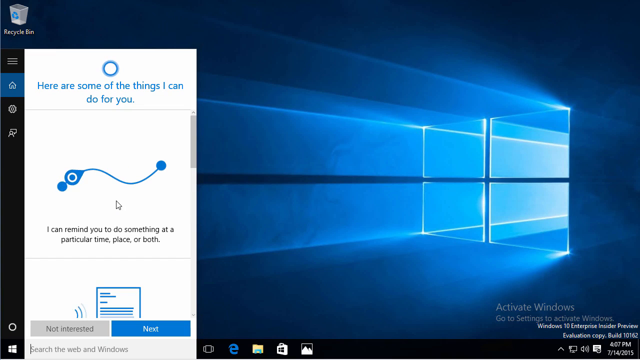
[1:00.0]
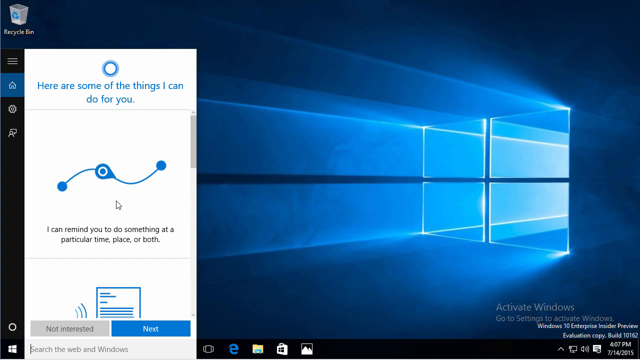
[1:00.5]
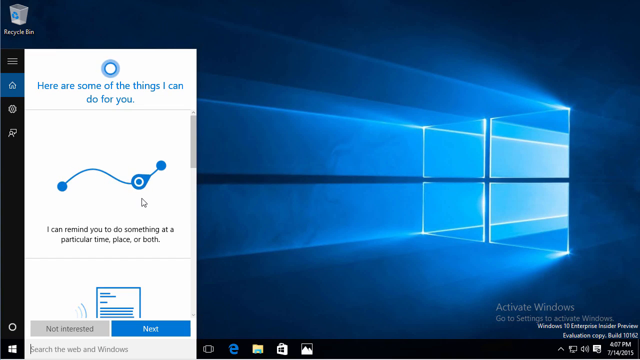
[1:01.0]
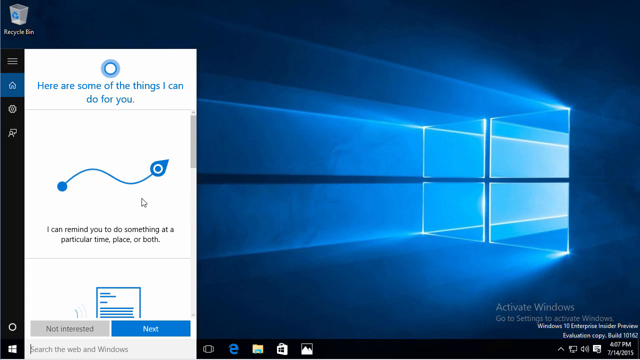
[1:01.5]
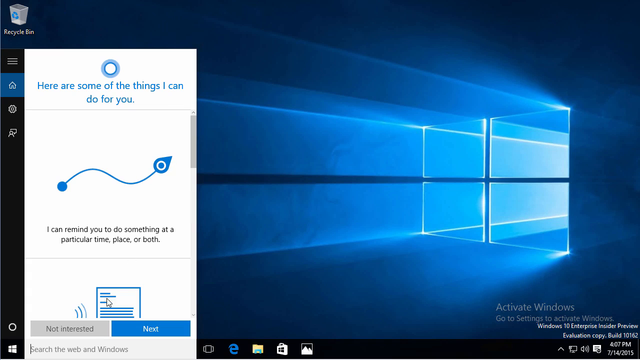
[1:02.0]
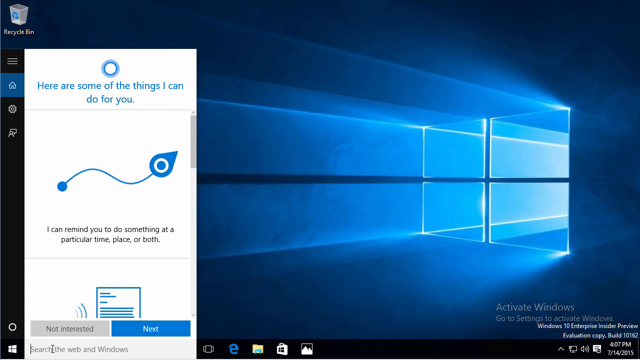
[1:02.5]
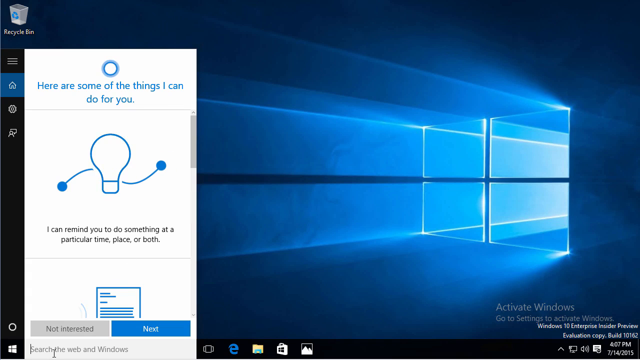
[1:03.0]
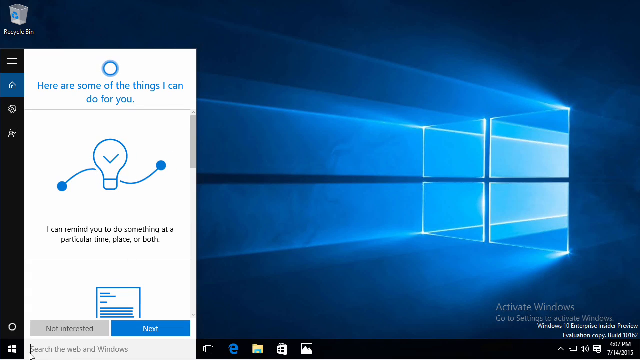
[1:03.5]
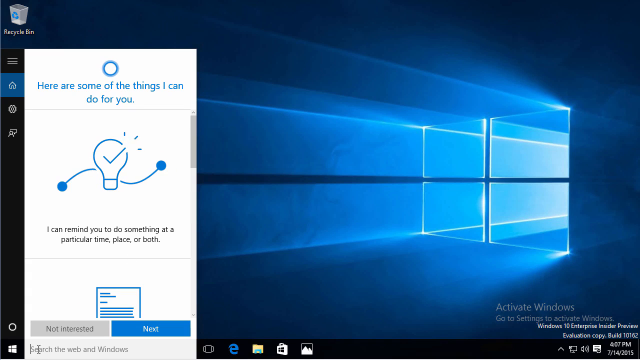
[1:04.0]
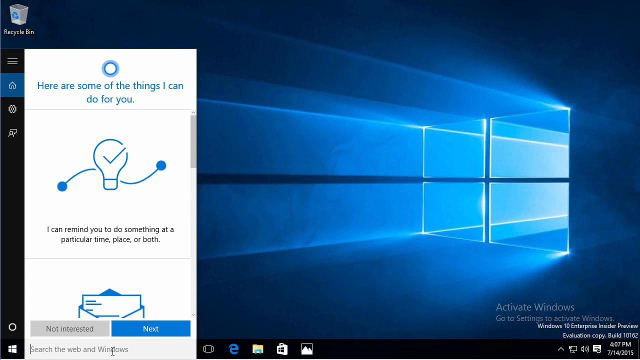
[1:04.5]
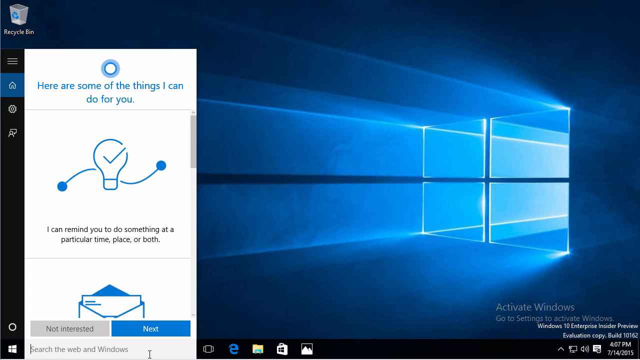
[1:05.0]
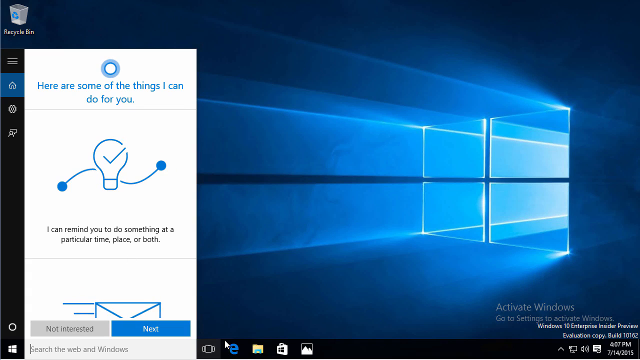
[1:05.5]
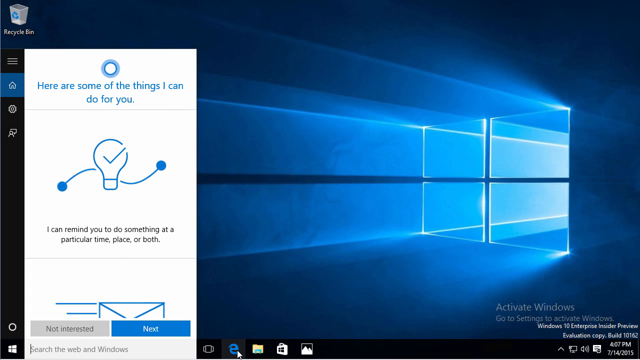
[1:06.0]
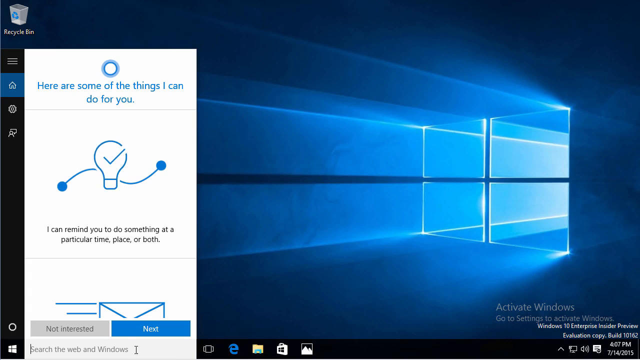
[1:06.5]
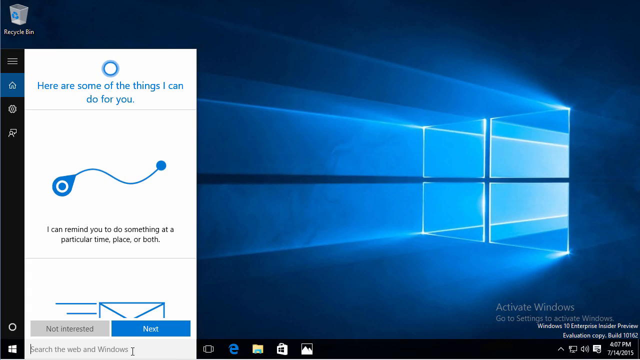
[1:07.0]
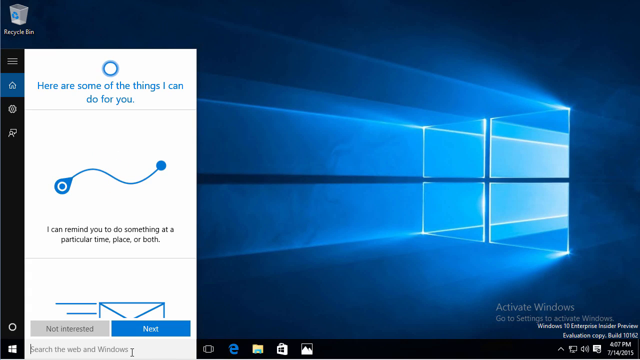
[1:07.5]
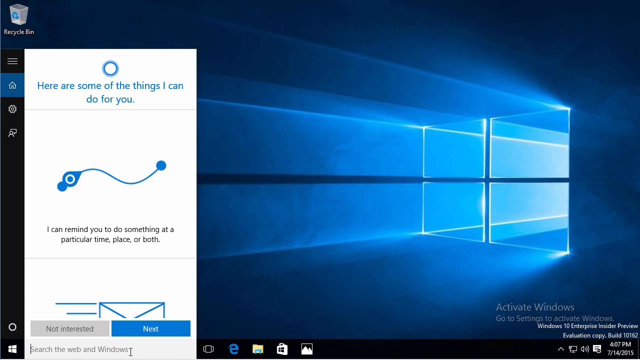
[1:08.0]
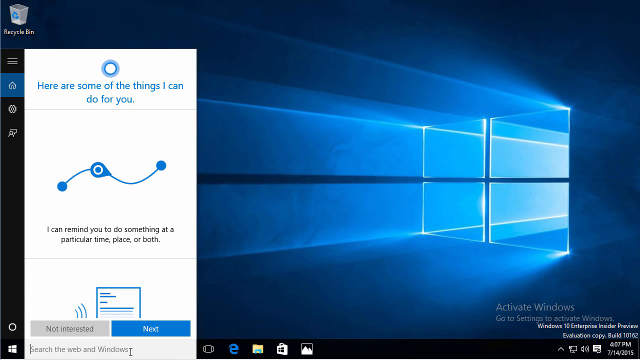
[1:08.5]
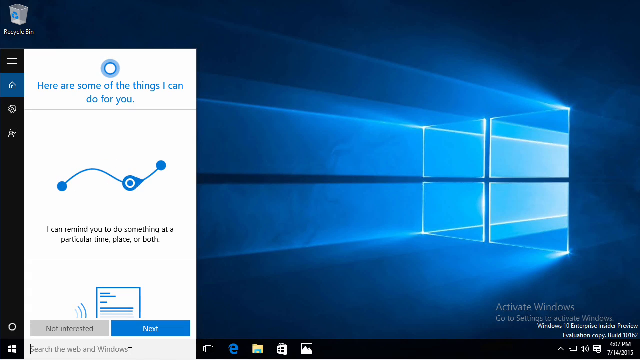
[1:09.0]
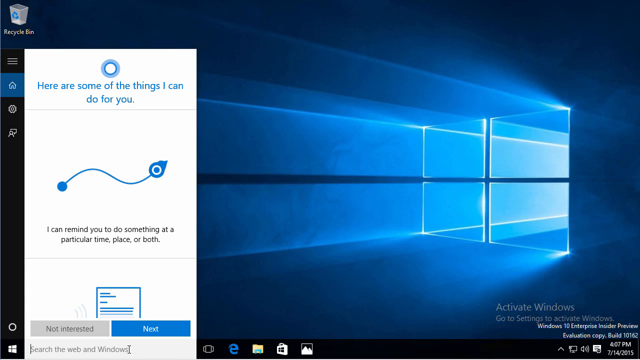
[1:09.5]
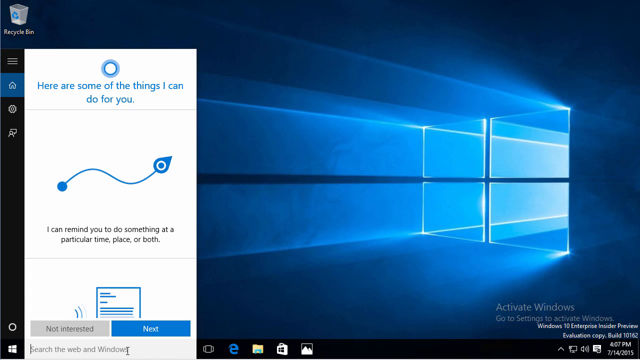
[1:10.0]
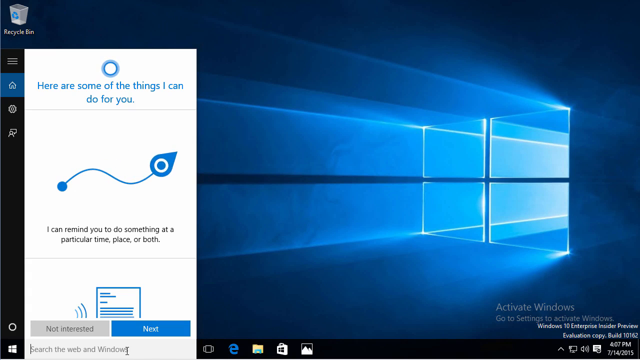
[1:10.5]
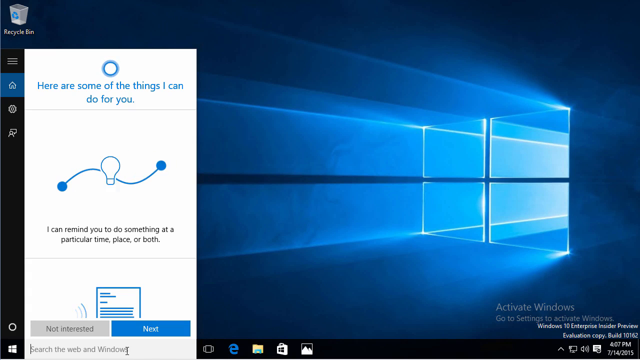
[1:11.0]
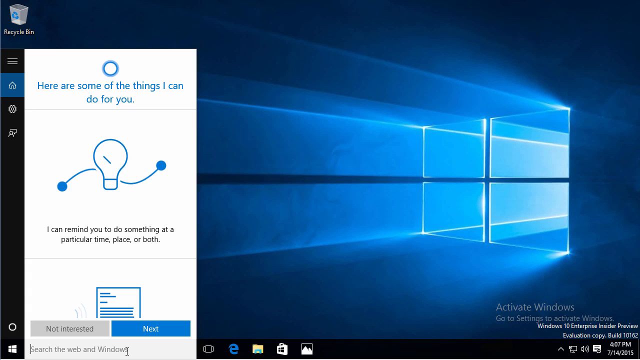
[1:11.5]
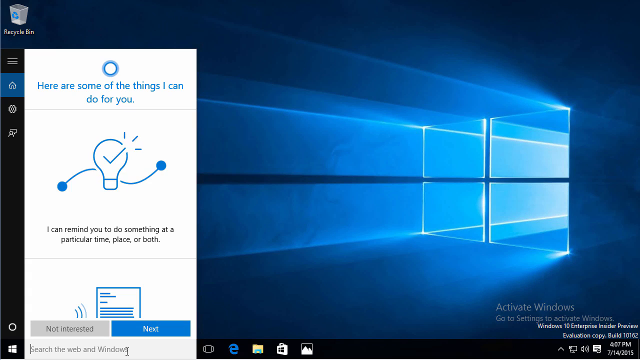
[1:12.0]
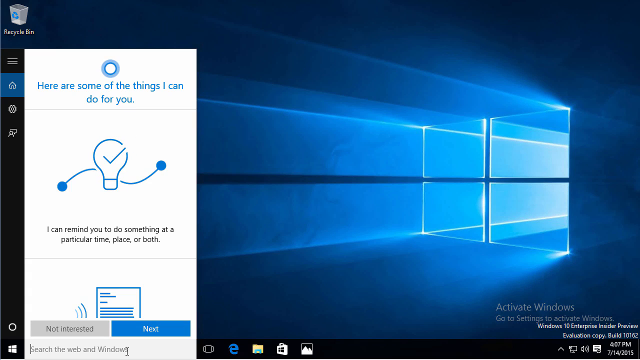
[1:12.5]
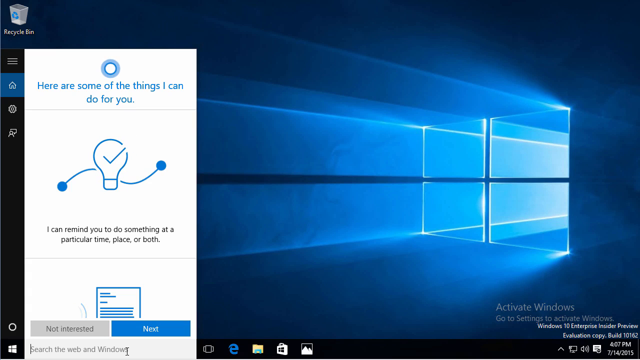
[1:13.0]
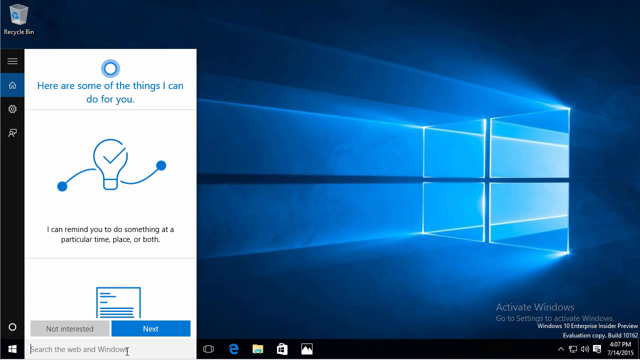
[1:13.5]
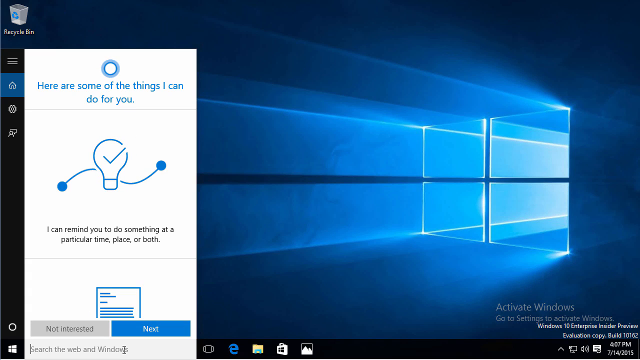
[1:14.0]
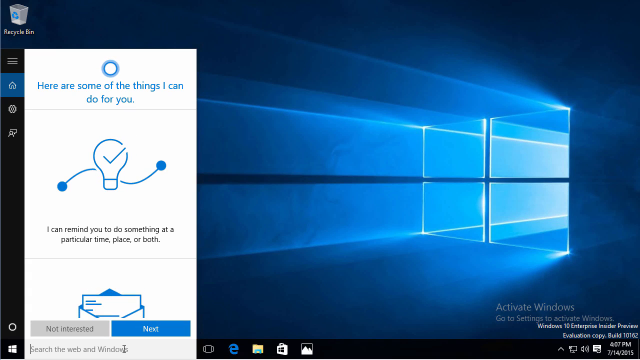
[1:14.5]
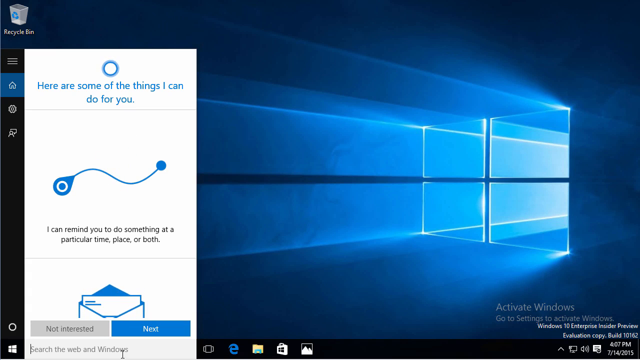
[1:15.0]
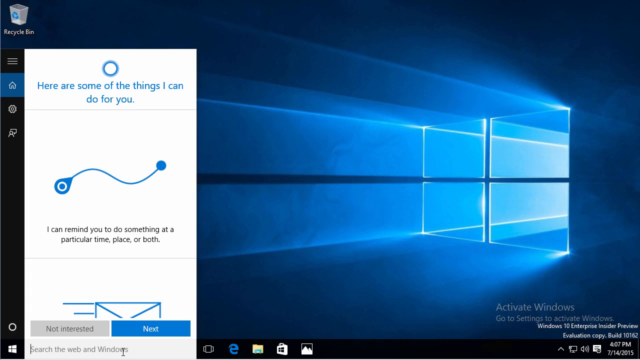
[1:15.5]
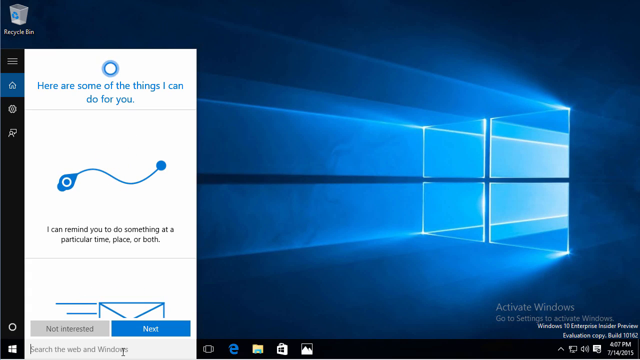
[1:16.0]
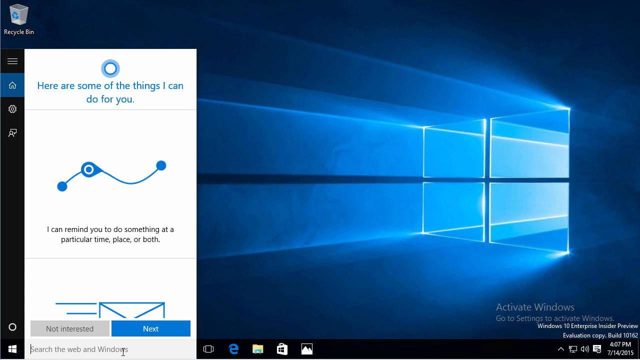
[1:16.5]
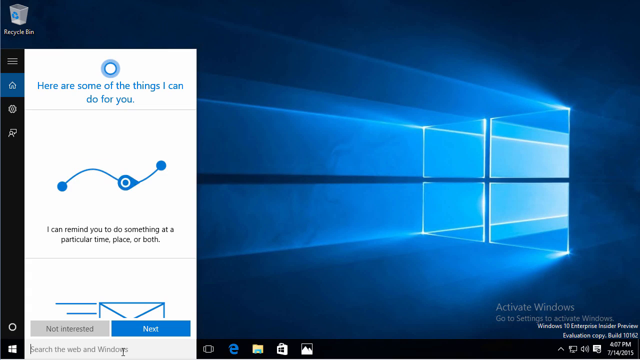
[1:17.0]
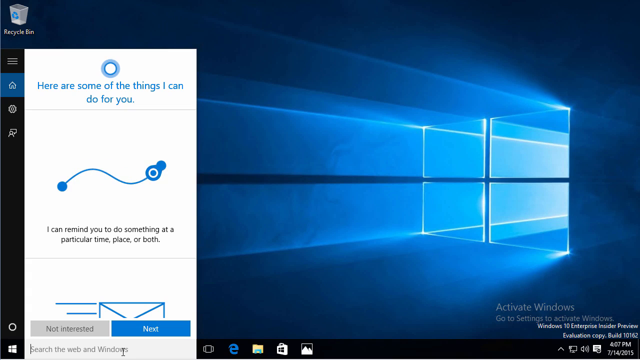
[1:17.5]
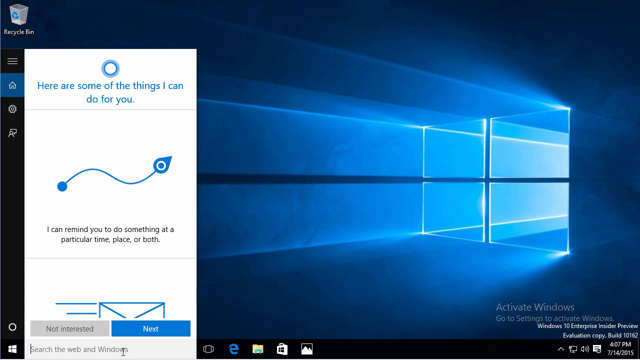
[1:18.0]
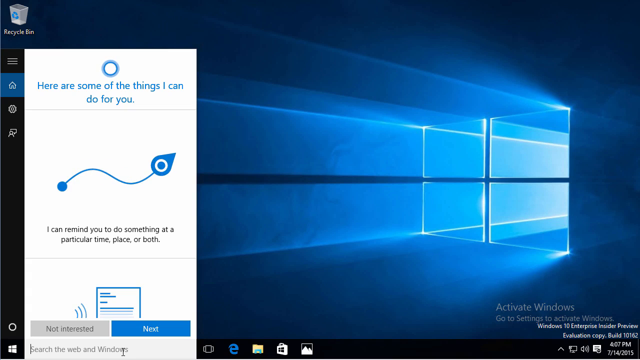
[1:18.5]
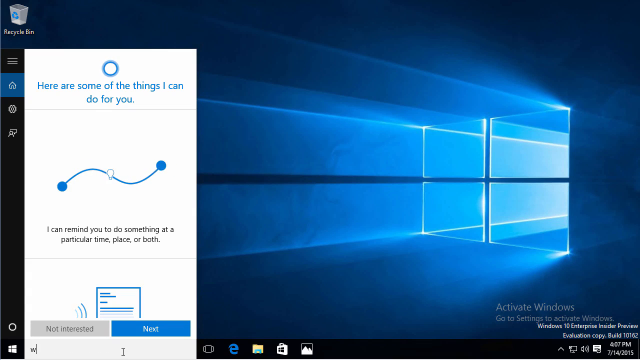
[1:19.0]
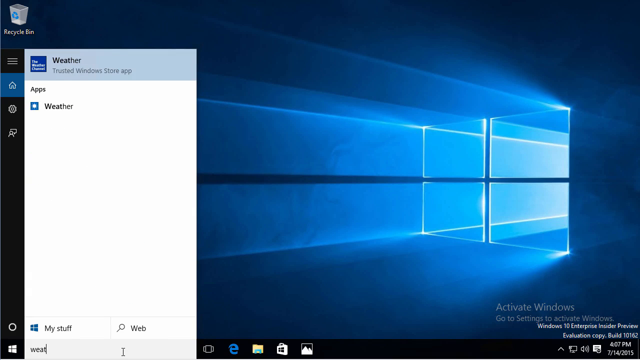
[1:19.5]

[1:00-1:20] The Windows 10 search box for the web and Windows is down at the bottom of the screen. Searching something like money there brings up related results, similar to a normal search engine.